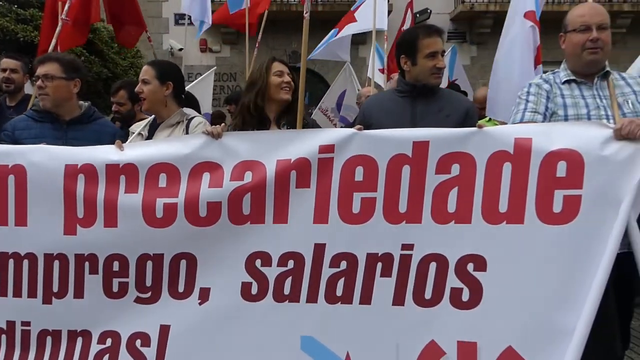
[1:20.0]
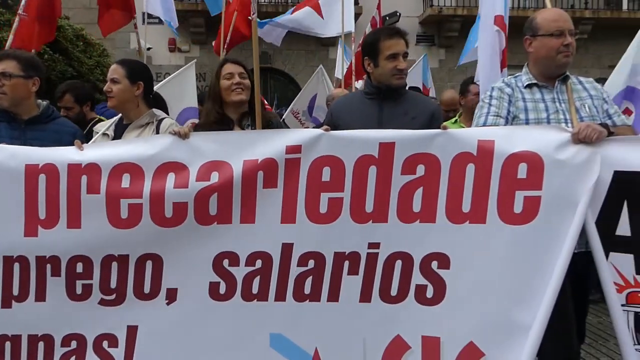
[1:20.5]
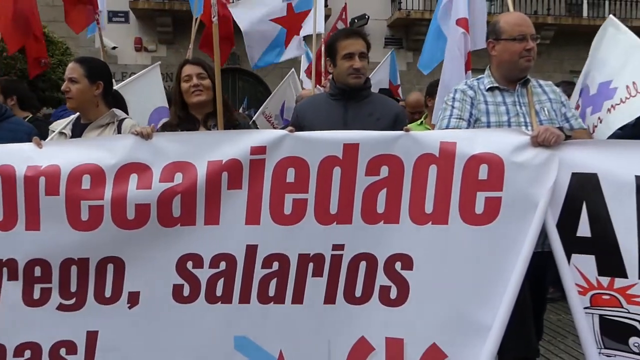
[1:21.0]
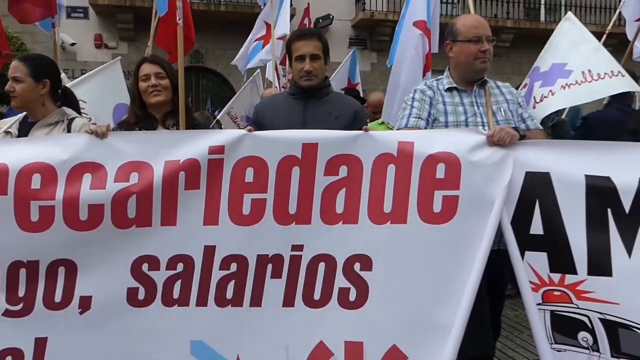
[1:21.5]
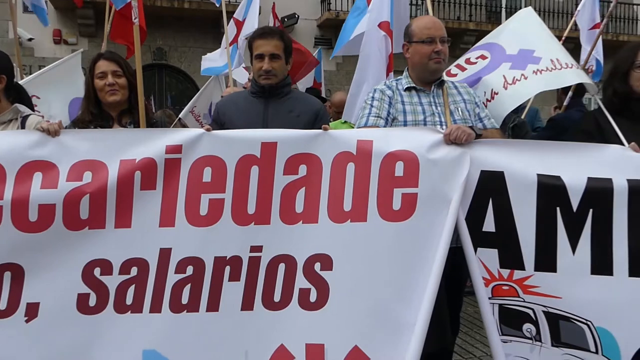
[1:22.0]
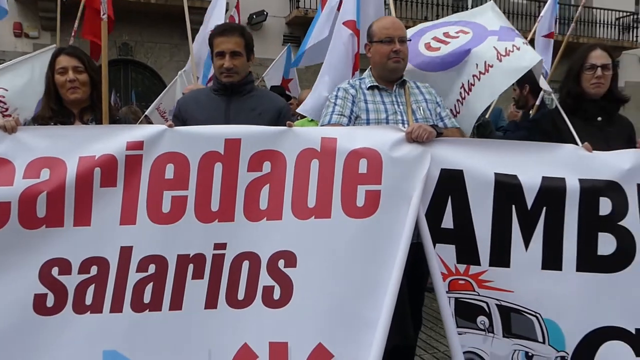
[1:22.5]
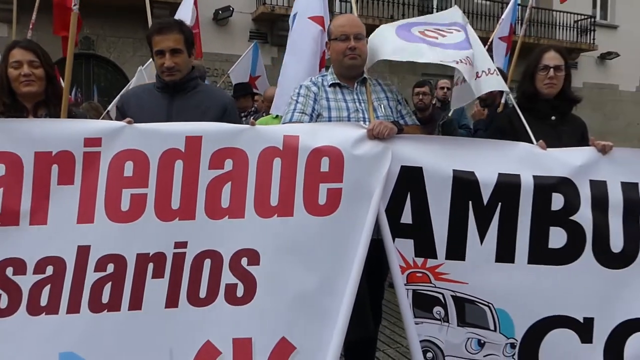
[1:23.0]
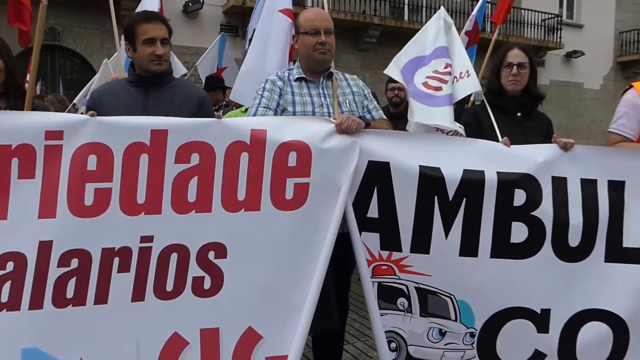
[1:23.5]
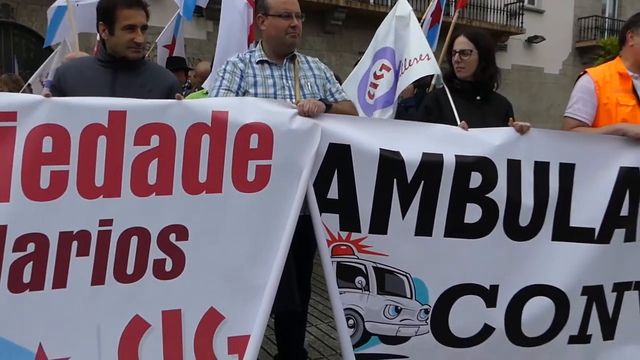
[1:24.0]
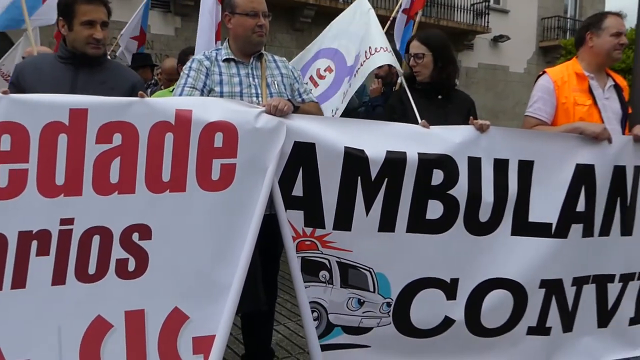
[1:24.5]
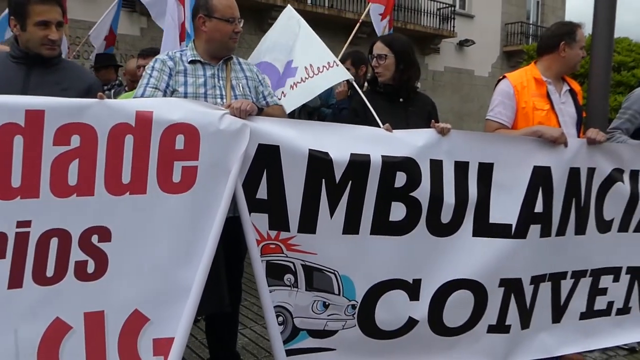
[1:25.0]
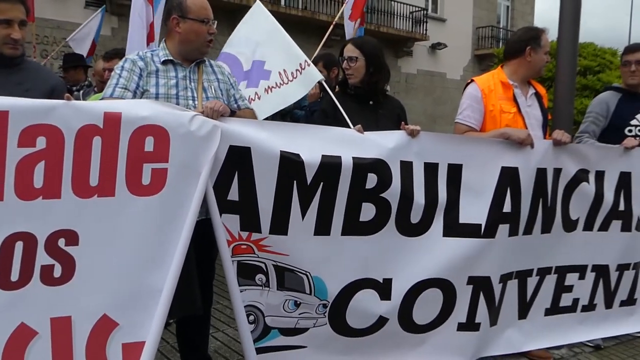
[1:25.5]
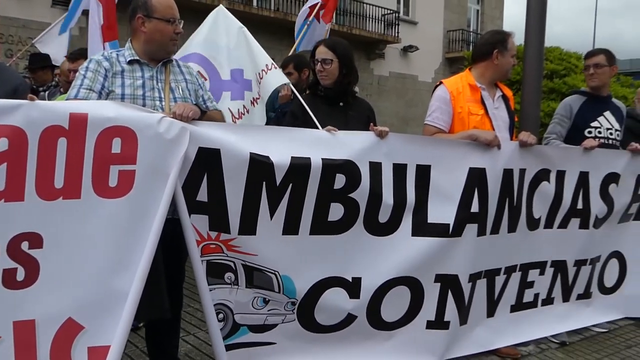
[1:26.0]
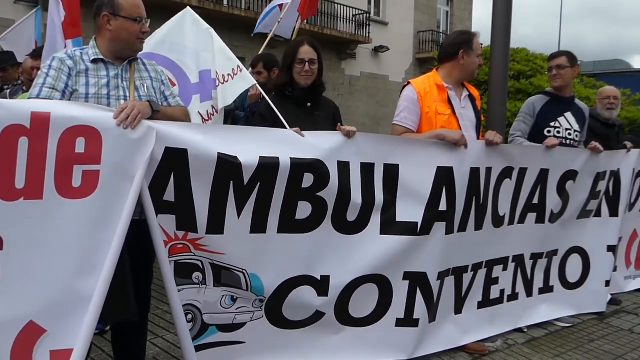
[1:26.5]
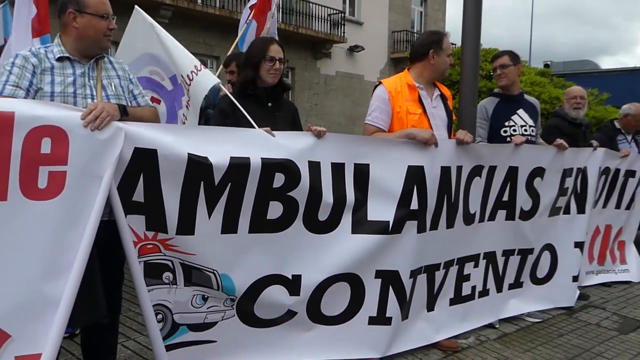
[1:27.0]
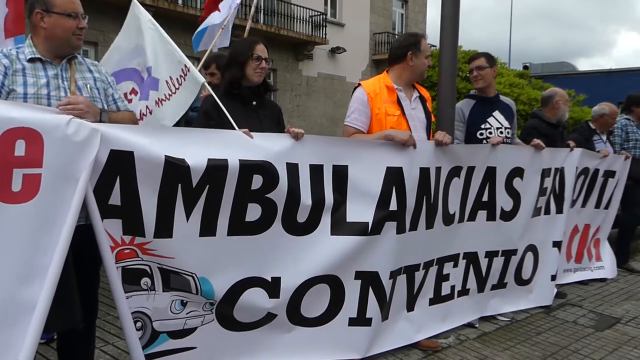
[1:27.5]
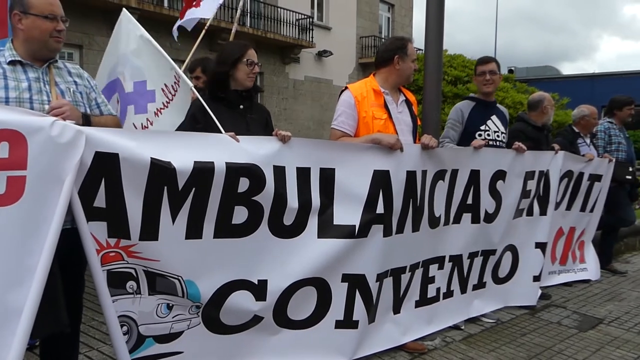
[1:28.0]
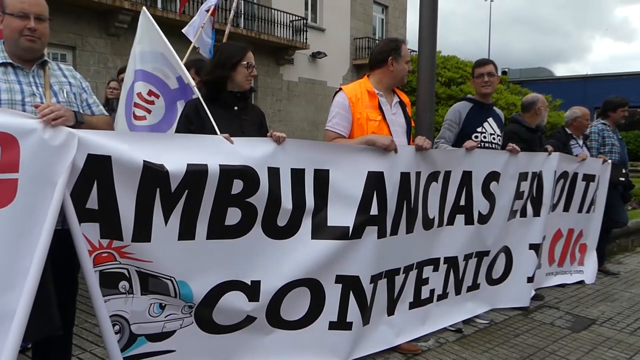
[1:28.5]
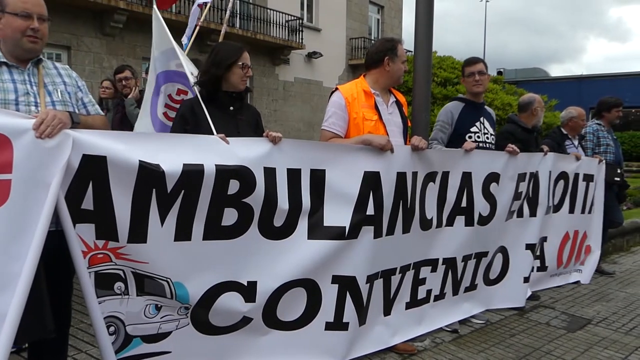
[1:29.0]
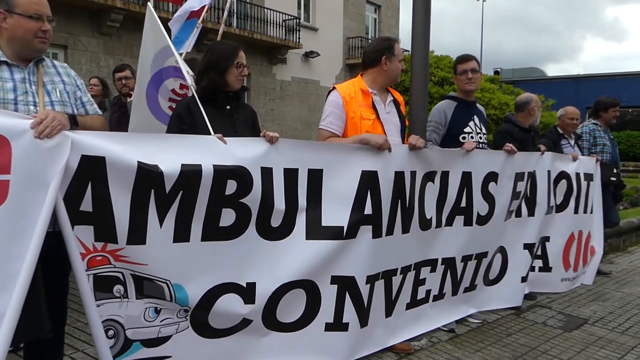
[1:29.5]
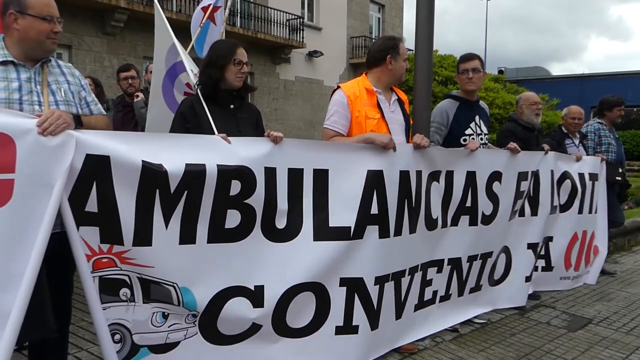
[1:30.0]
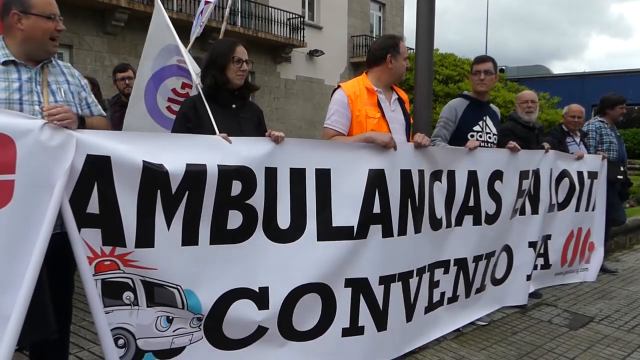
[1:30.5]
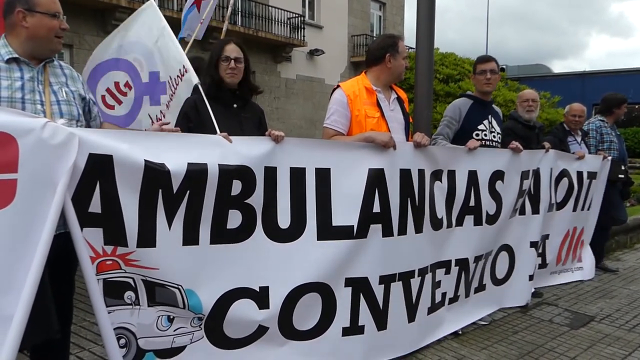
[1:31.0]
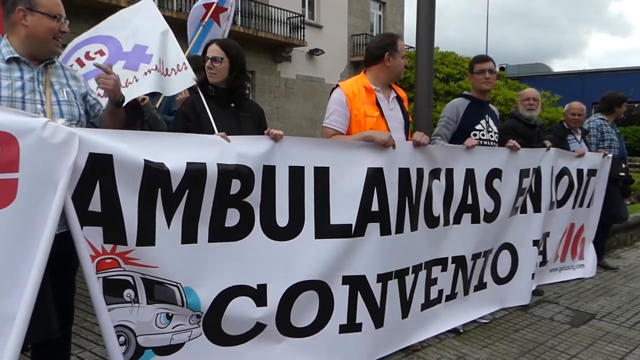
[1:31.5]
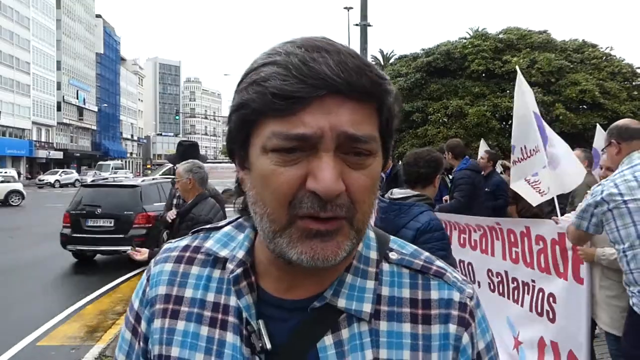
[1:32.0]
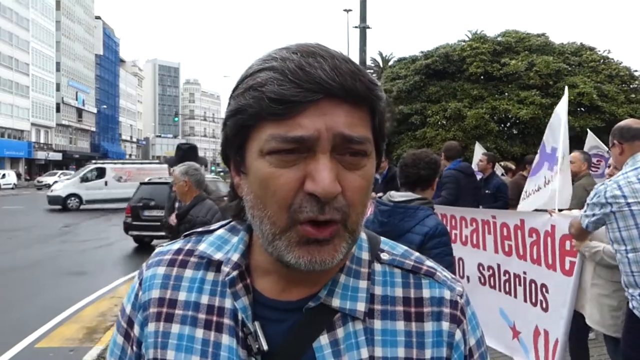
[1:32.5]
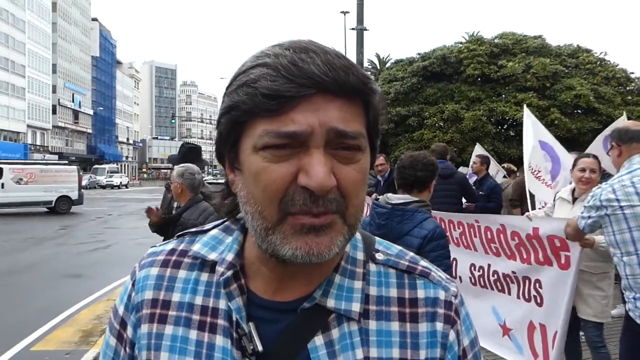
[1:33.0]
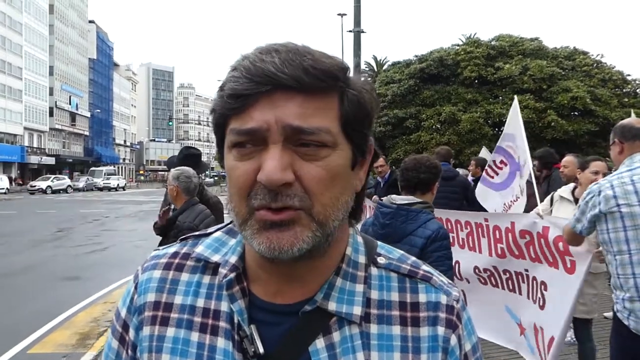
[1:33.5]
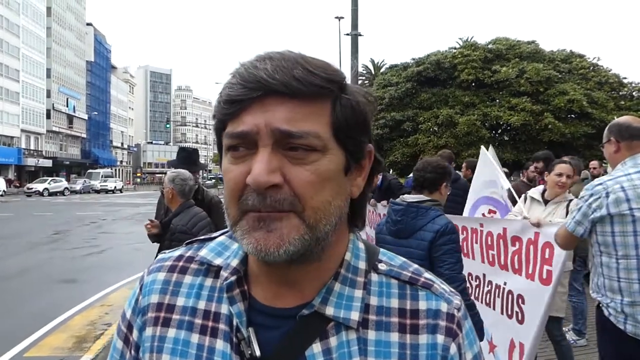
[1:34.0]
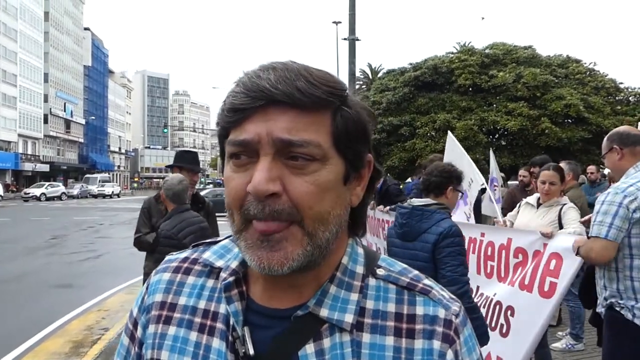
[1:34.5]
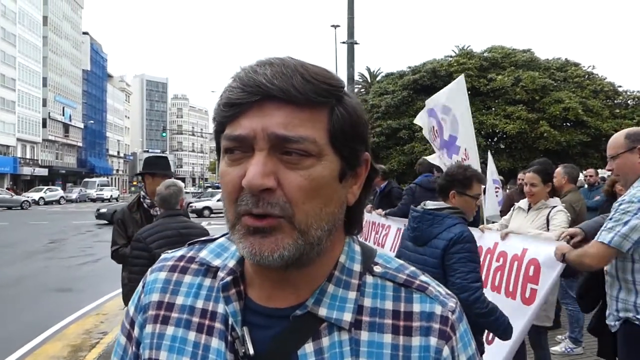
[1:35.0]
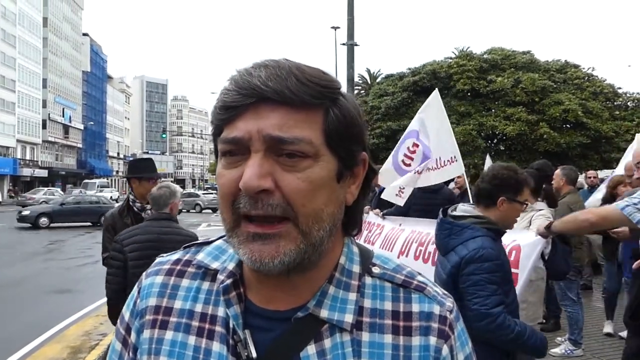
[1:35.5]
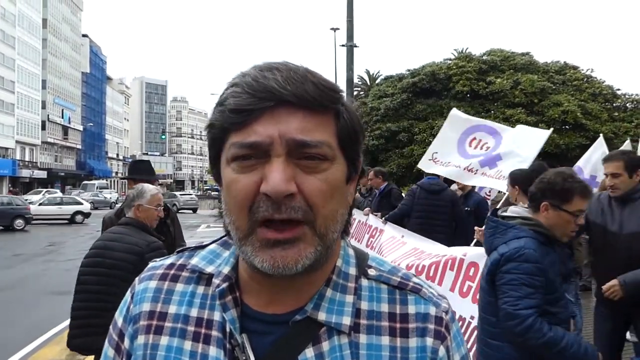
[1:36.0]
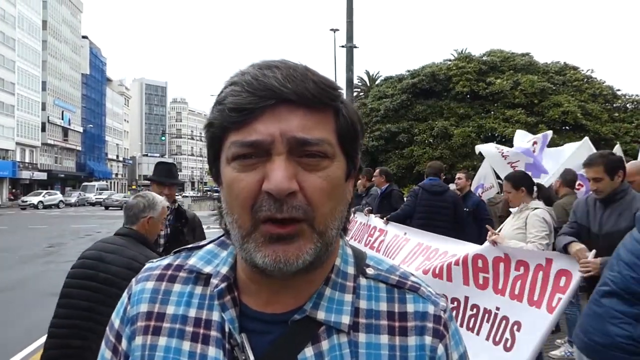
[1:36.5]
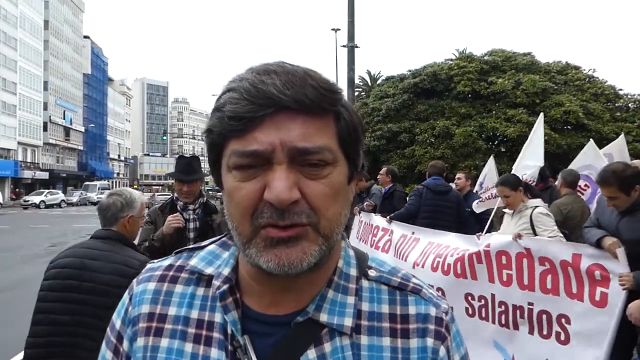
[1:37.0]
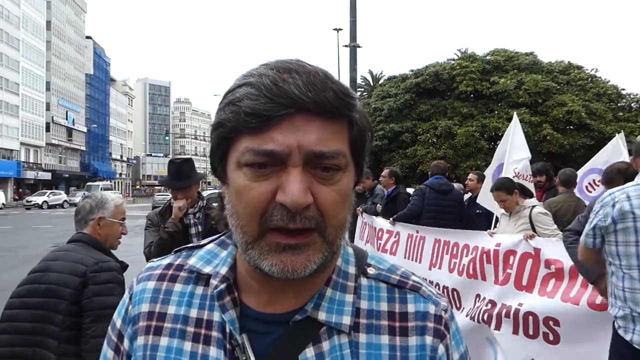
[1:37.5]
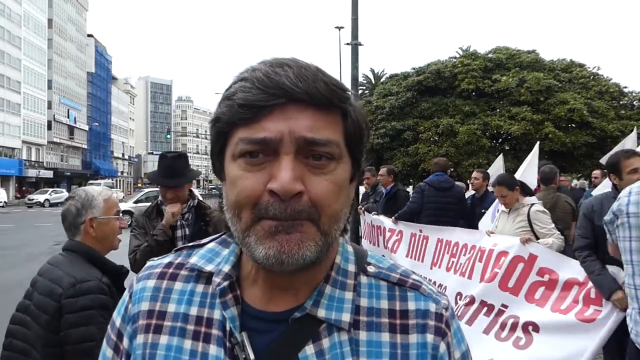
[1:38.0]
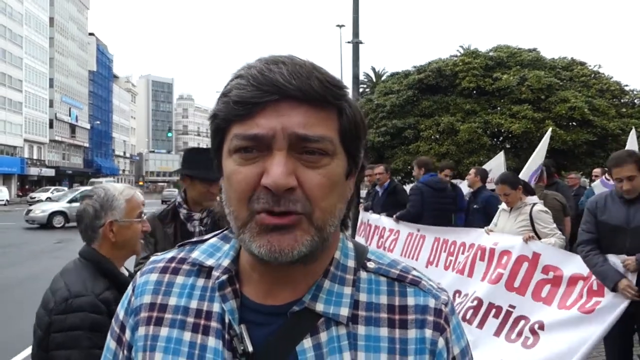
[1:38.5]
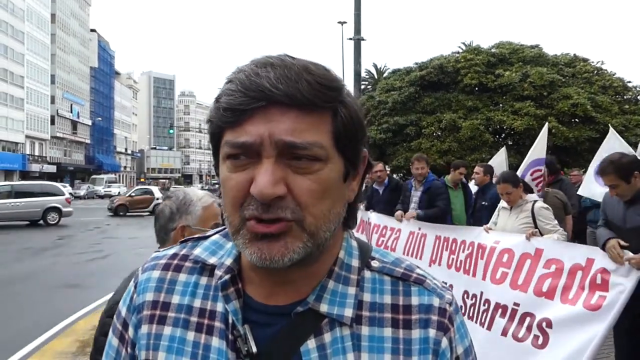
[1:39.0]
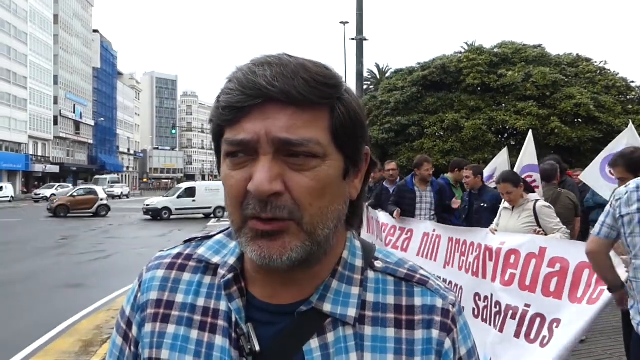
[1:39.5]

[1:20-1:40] A close-up shows a line of demonstrators at a peaceful demonstration about salaries in the ambulance services, probably on a picket line. They all have flags, and the front row holds up banners as the camera sweeps along them to show them up close. Most of the demonstrators are men; one woman holds up the banner along with five men, and the man in the checked shirt stands at the end of the line. It is not raining at the moment, but the roads are wet, no umbrellas are up, and the sky is very overcast and kind of white. They stand alongside a busy, very wide road.